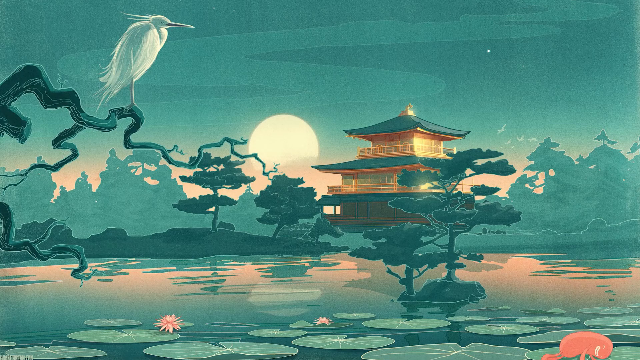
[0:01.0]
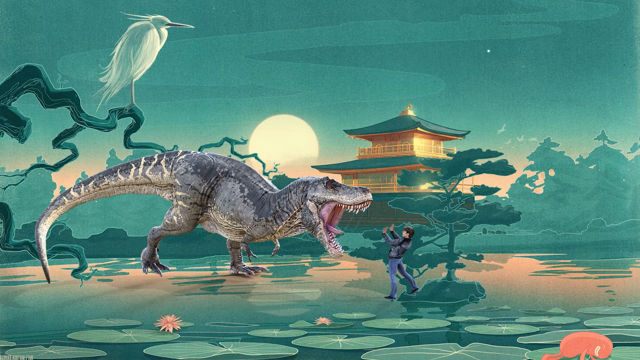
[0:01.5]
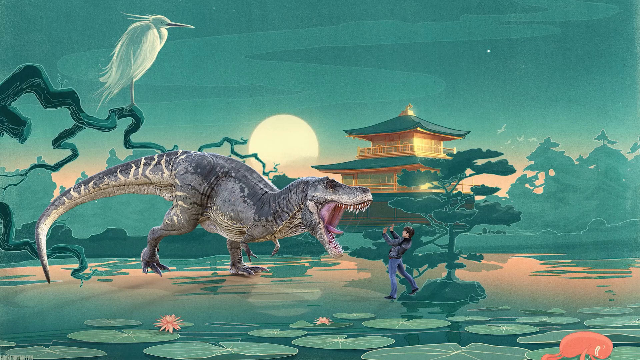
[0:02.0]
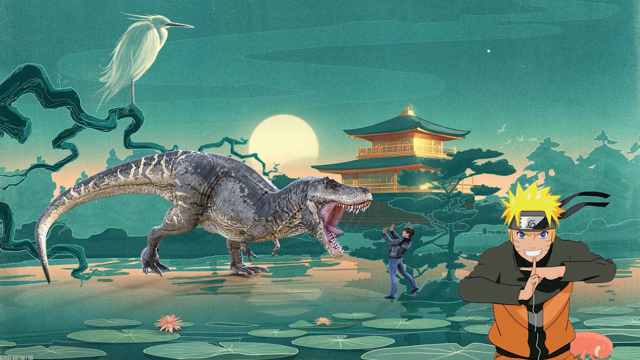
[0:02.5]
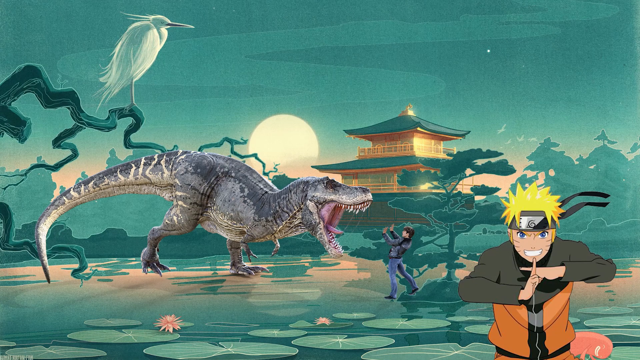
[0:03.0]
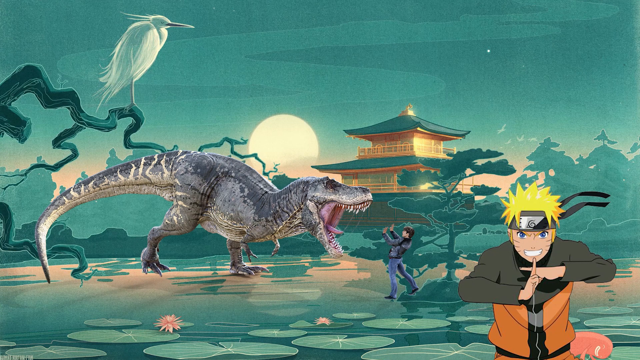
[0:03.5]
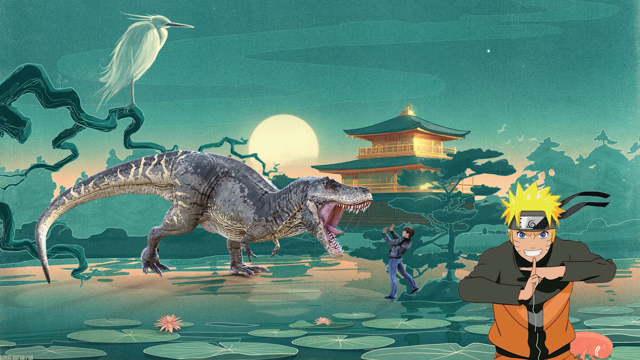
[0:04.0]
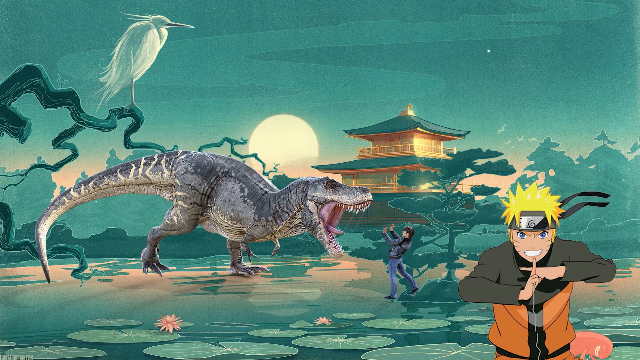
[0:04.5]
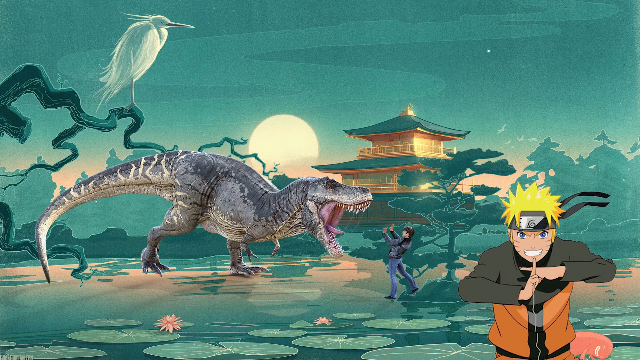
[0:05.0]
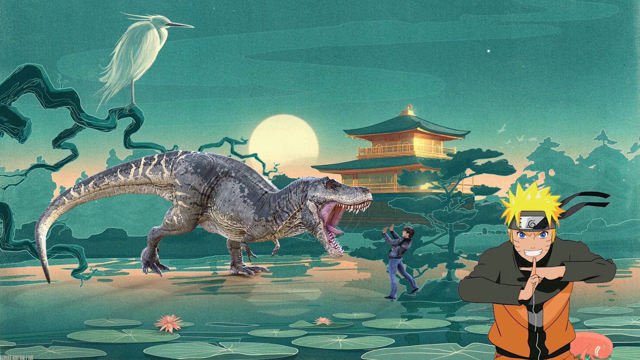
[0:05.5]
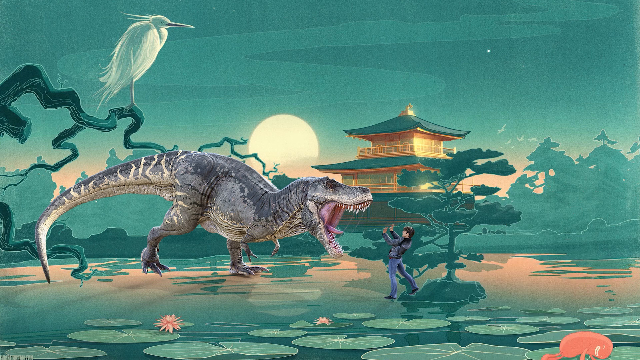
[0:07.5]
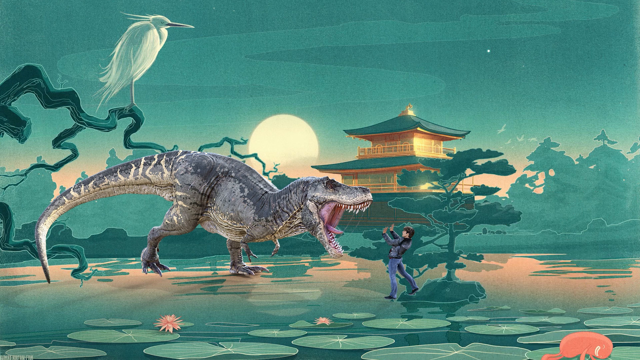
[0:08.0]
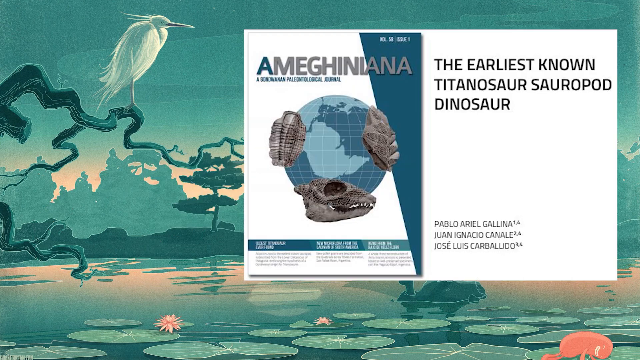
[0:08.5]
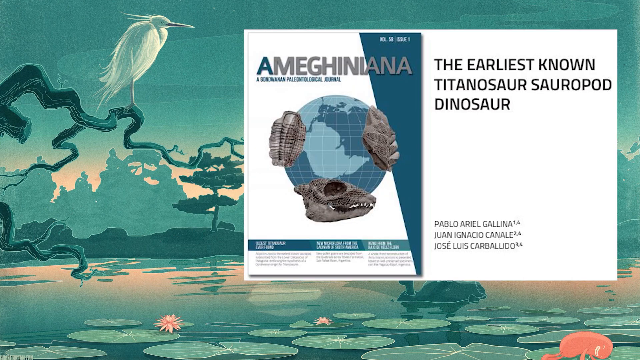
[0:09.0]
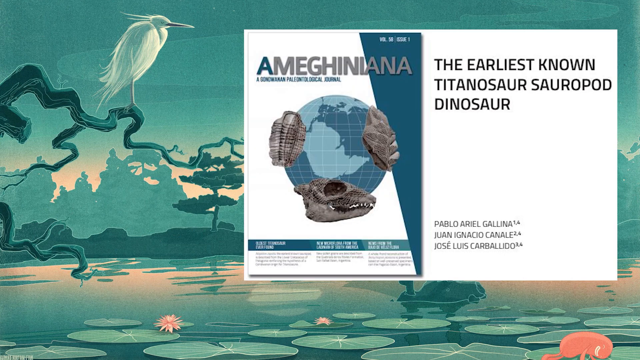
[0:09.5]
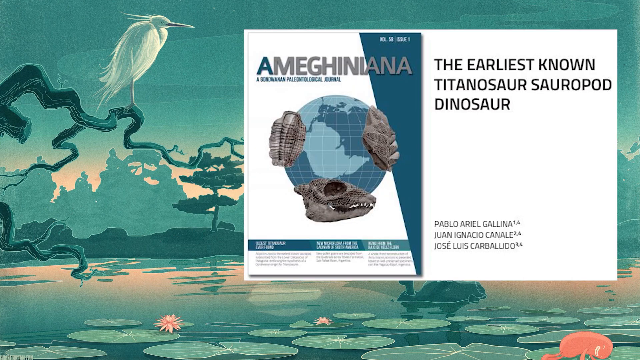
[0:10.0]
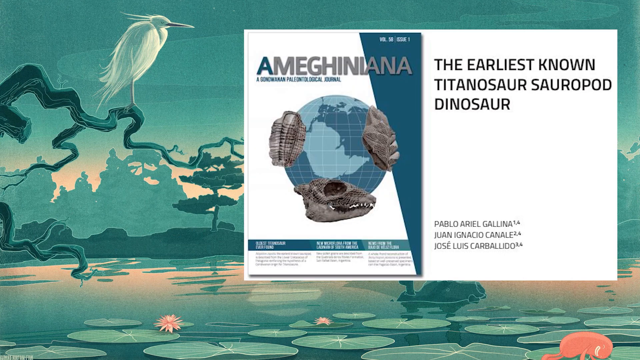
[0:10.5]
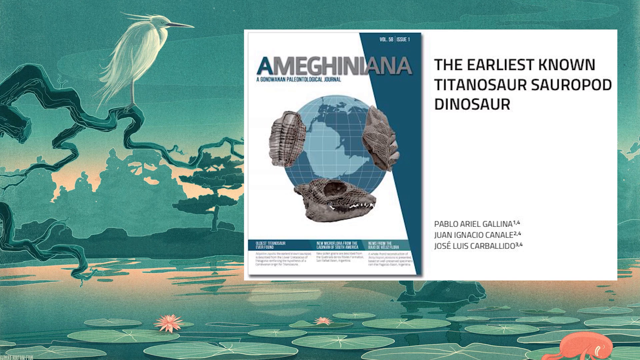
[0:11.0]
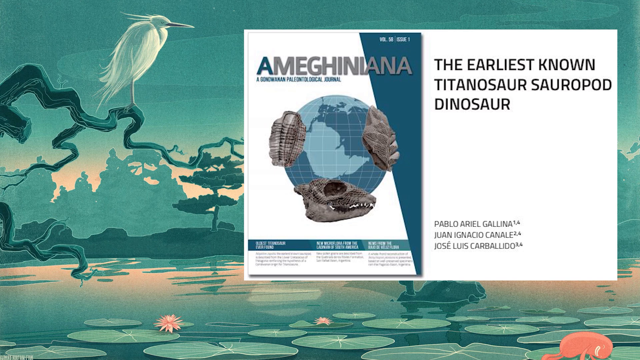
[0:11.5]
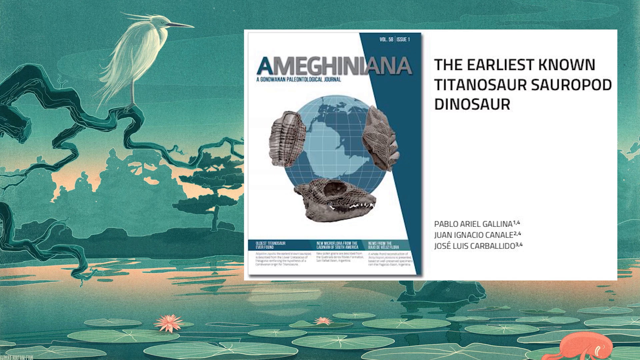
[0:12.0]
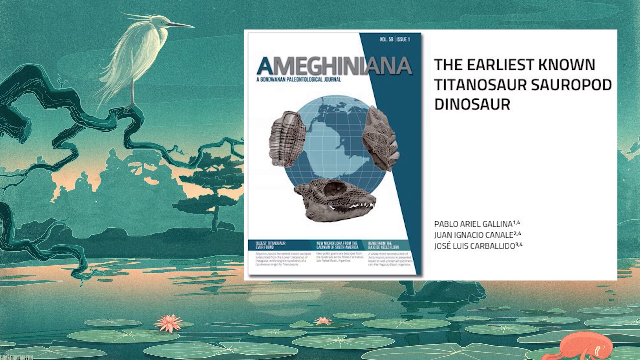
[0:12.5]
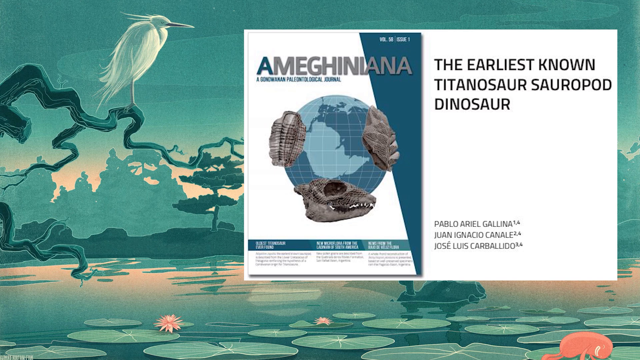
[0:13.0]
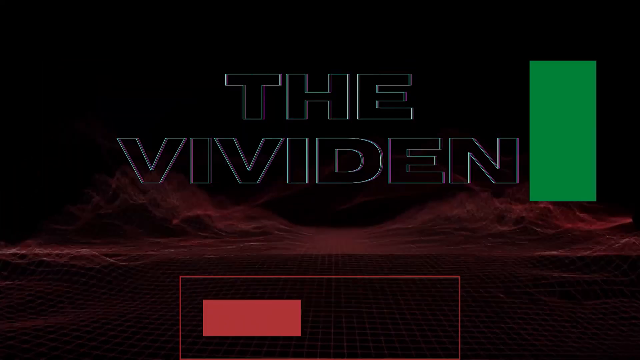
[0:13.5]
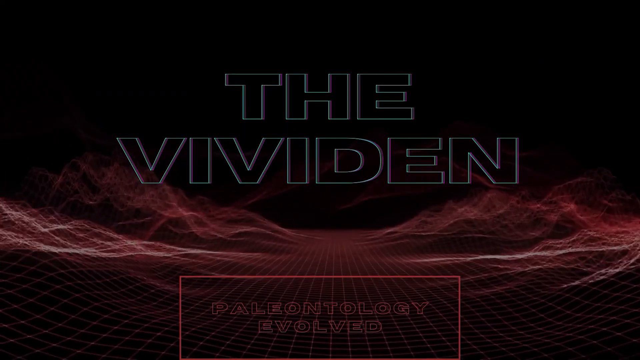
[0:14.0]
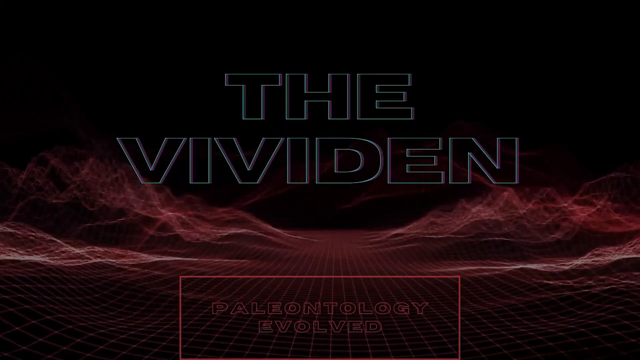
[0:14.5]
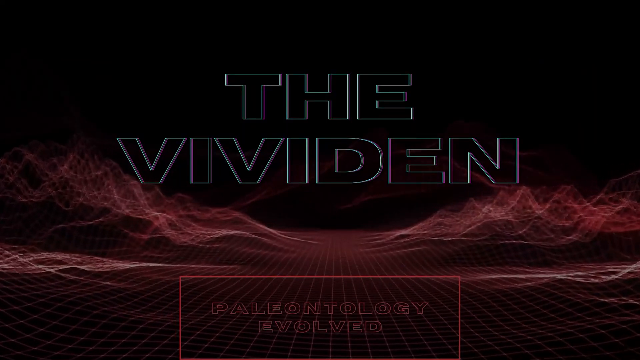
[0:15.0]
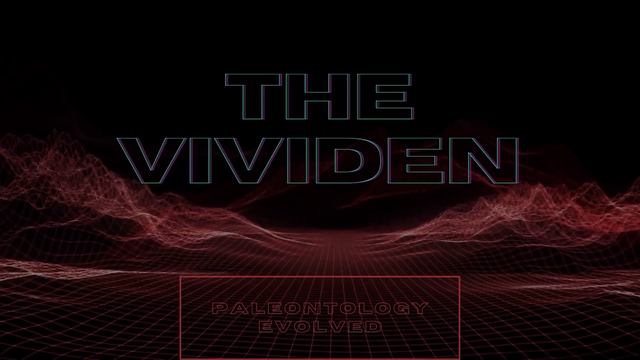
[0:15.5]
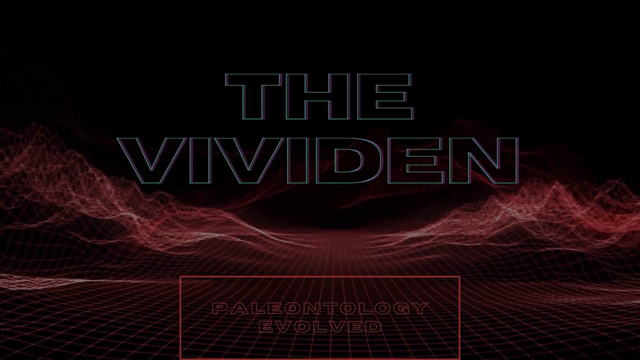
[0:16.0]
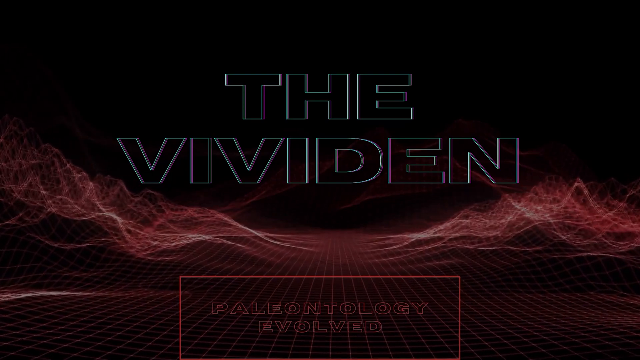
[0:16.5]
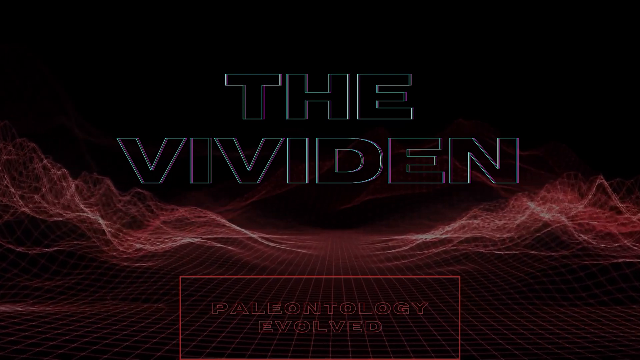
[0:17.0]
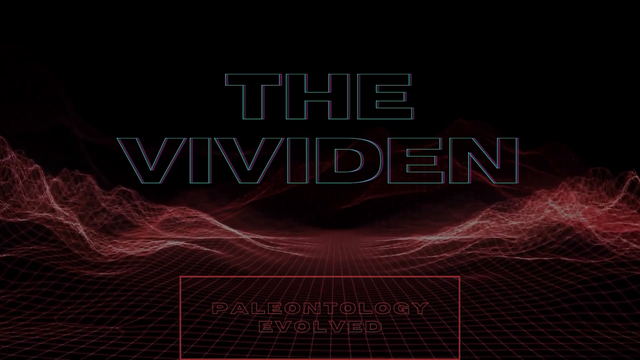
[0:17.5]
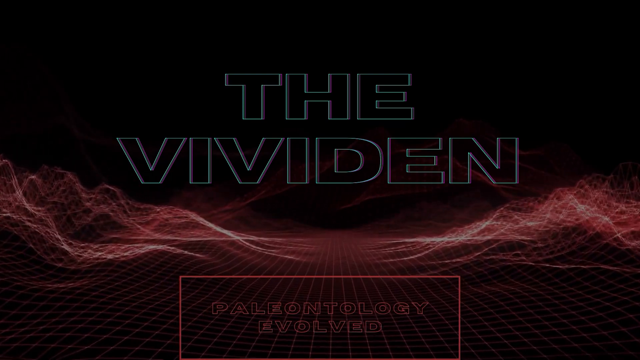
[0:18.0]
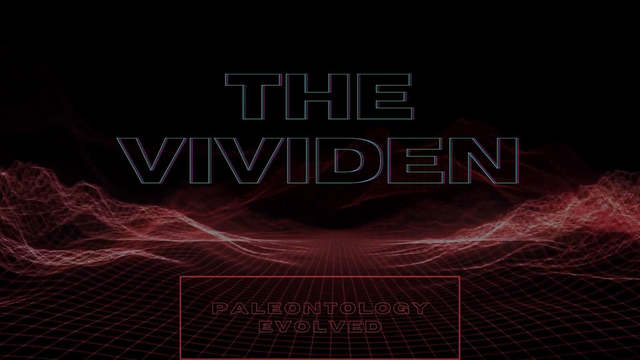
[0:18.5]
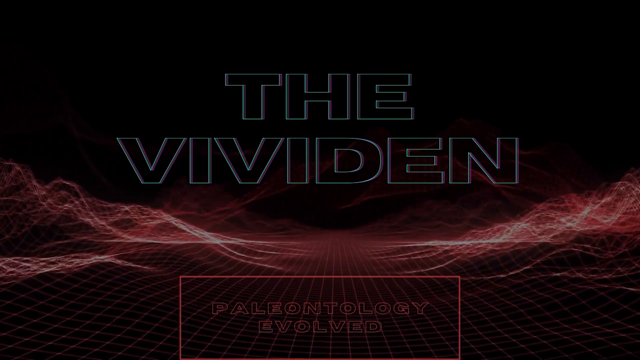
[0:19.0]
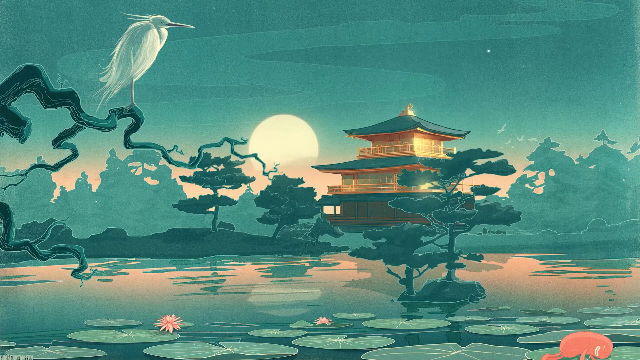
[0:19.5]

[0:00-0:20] A Japanese-style building with multiple layered rooftops is in view. A Tyrannosaurus rex appears on the screen over top of it, then a man with his hands up toward the Tyrannosaurus rex, and then a Naruto character off on the right side. A book cover is then overlaid on top of the screen, and all of those characters have disappeared. The cover of the book reads "Amegiana" and says "Amegiana is the earliest known Titanosaur sauropod dinosaur." There is then a transition to a new screen with text that includes "Palaeontology Evolved," with what looks like a grid-looking ground and mountains on the right side, and it is kind of red.